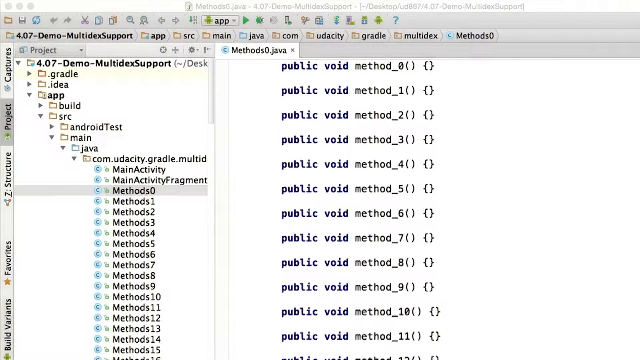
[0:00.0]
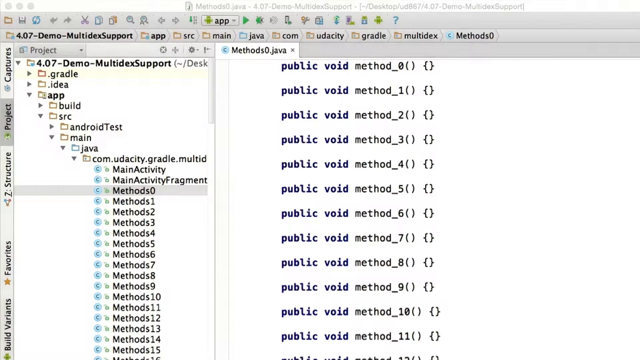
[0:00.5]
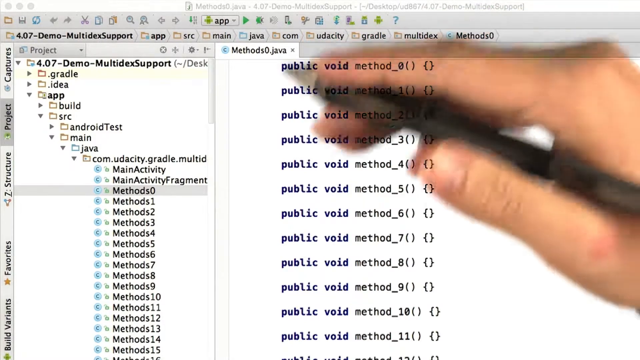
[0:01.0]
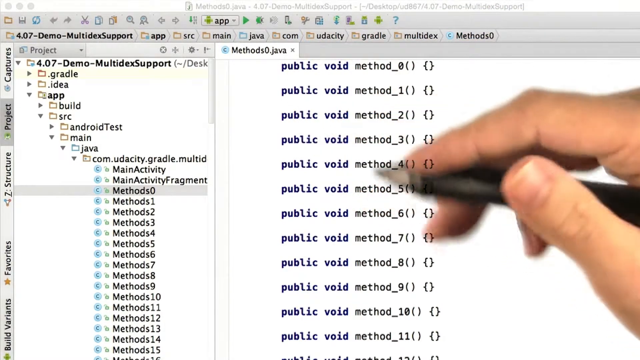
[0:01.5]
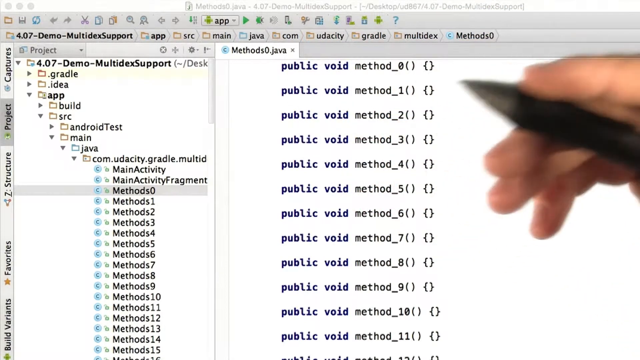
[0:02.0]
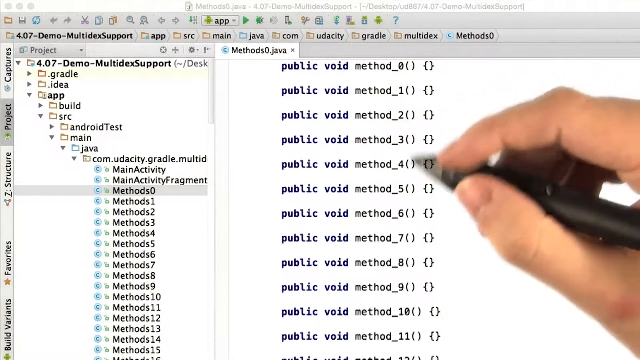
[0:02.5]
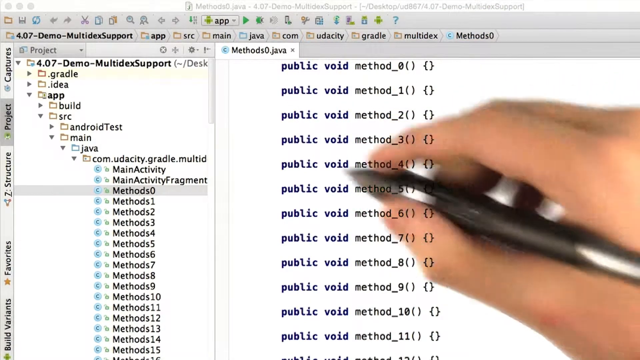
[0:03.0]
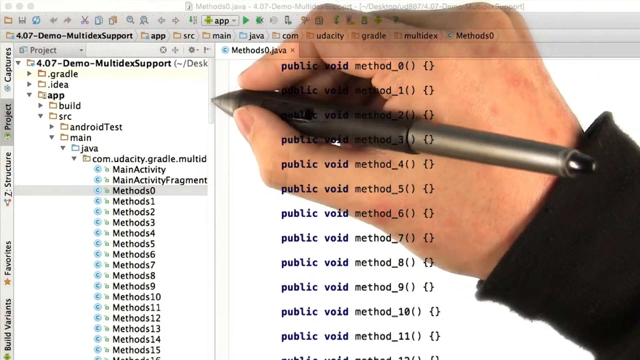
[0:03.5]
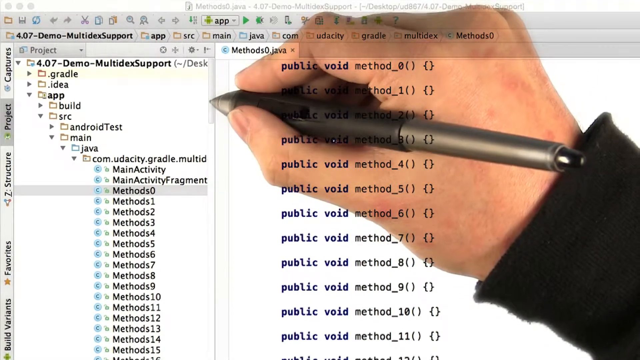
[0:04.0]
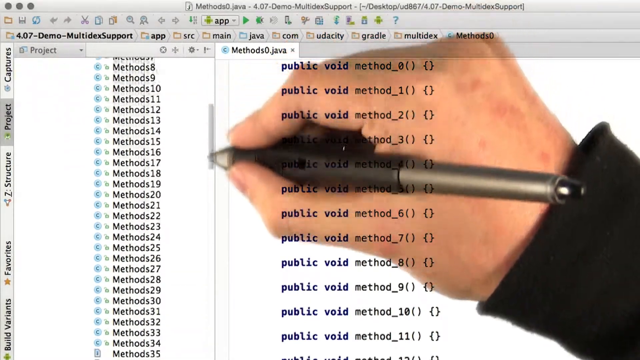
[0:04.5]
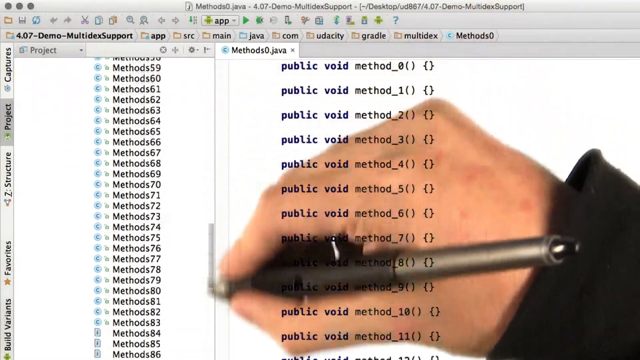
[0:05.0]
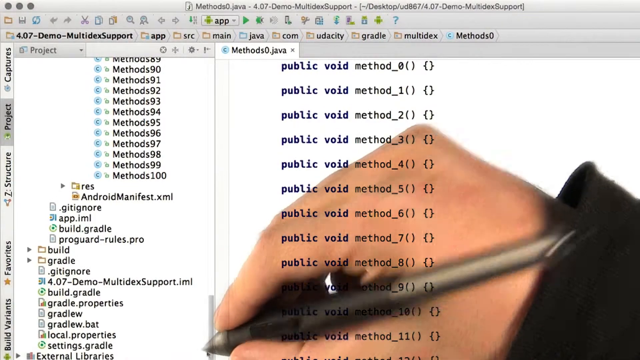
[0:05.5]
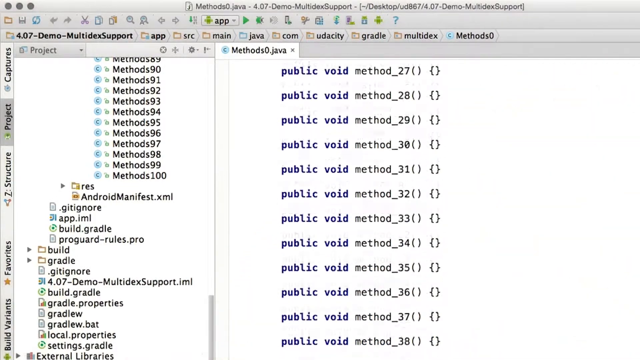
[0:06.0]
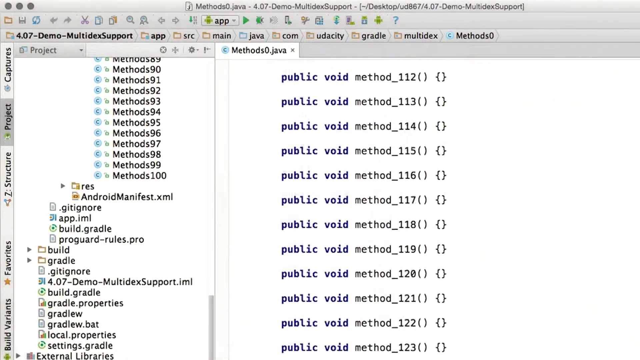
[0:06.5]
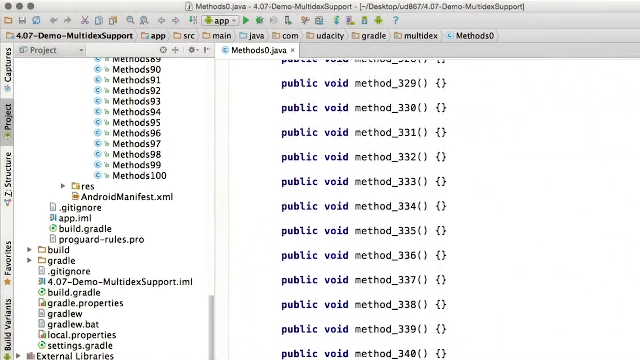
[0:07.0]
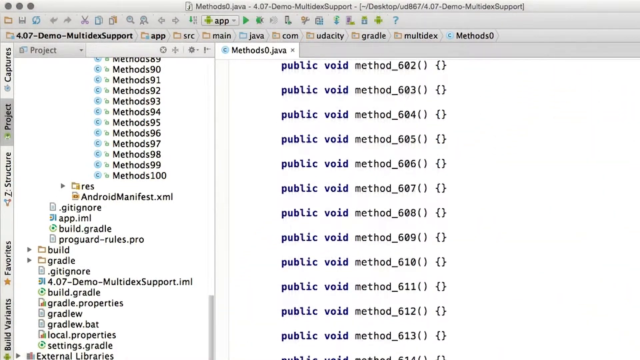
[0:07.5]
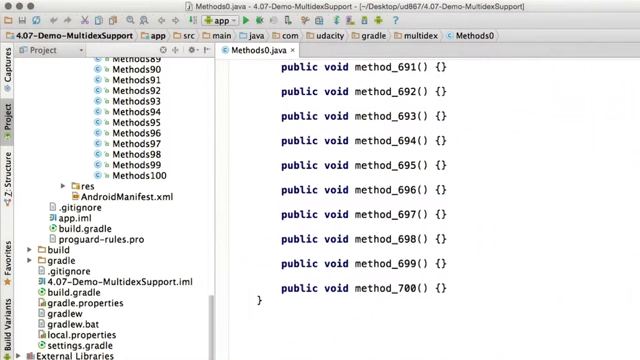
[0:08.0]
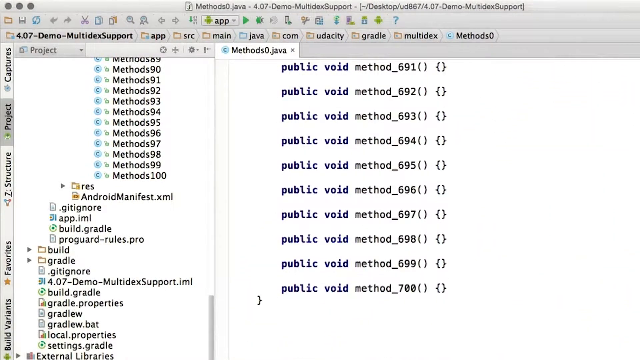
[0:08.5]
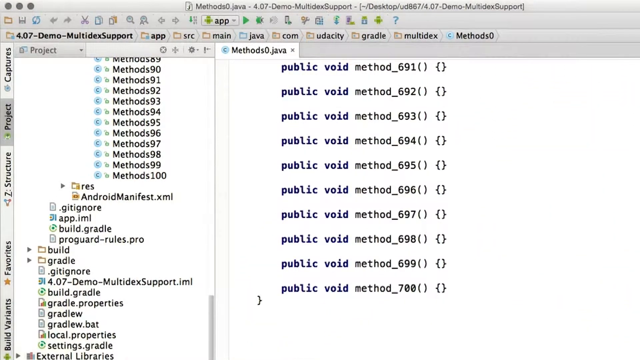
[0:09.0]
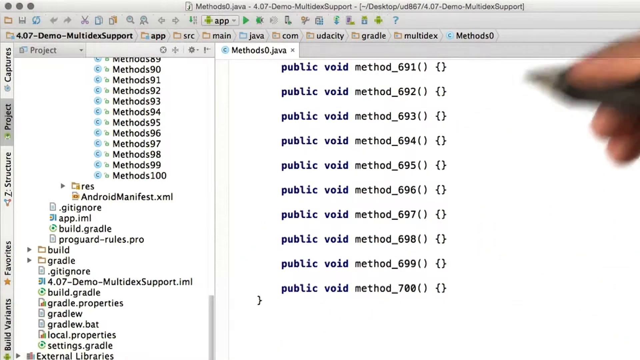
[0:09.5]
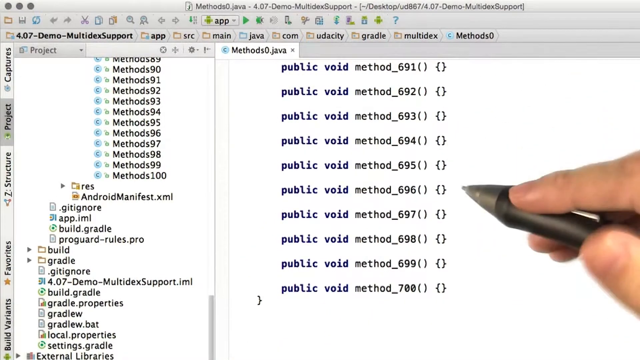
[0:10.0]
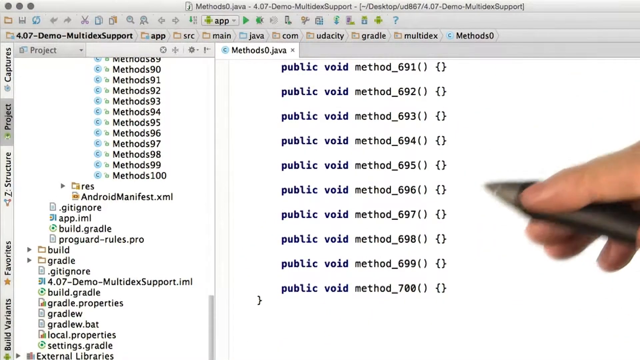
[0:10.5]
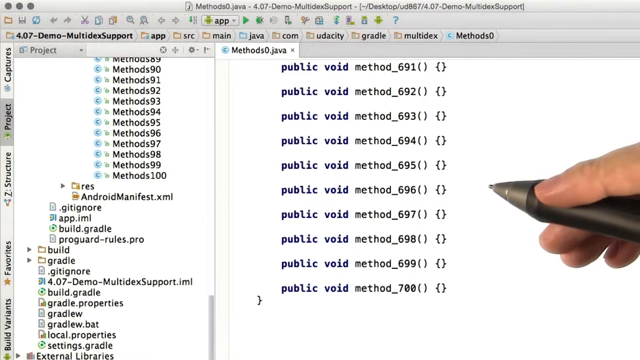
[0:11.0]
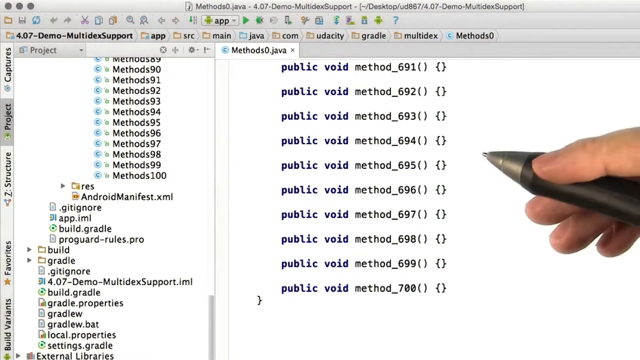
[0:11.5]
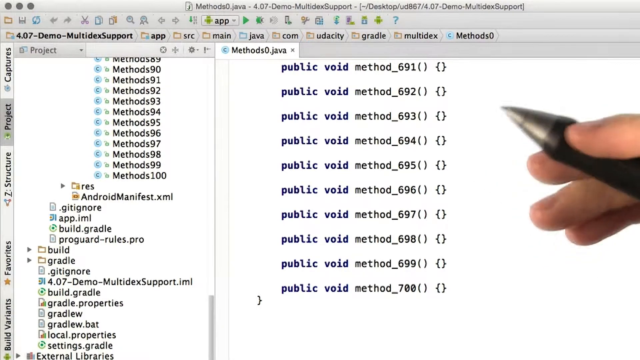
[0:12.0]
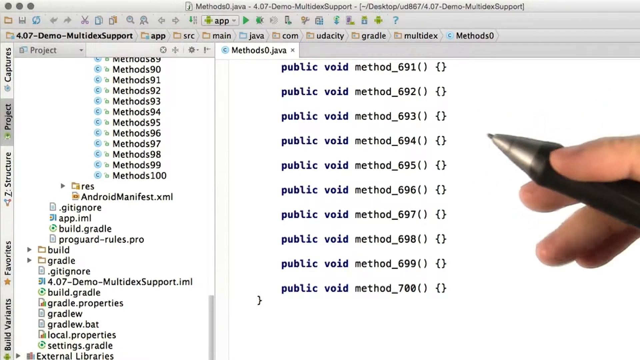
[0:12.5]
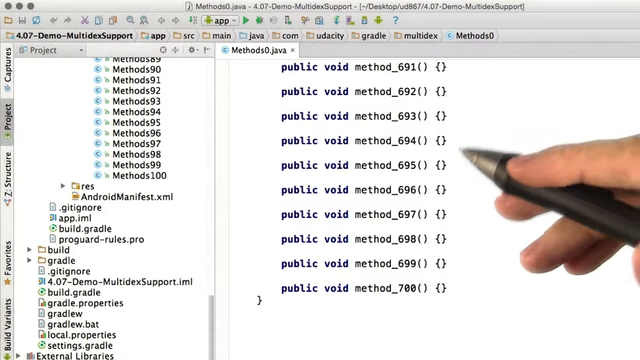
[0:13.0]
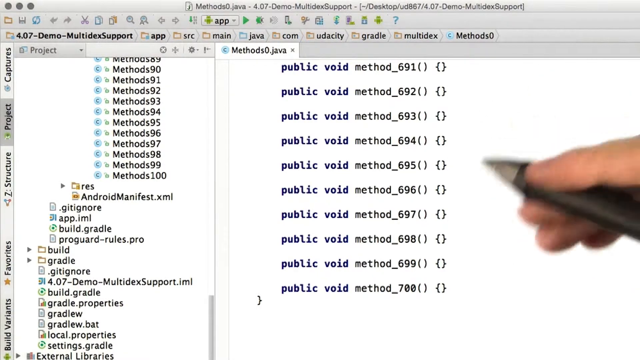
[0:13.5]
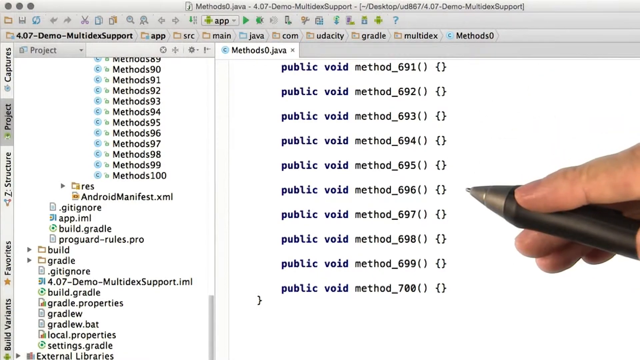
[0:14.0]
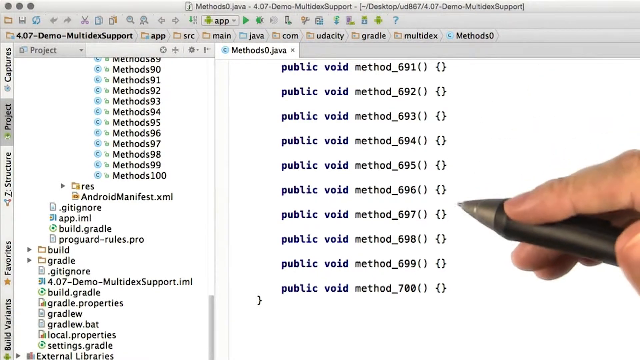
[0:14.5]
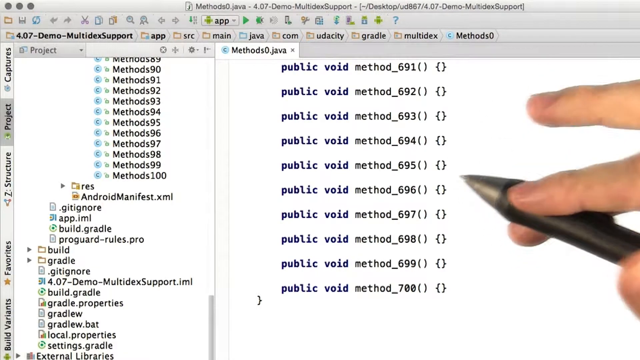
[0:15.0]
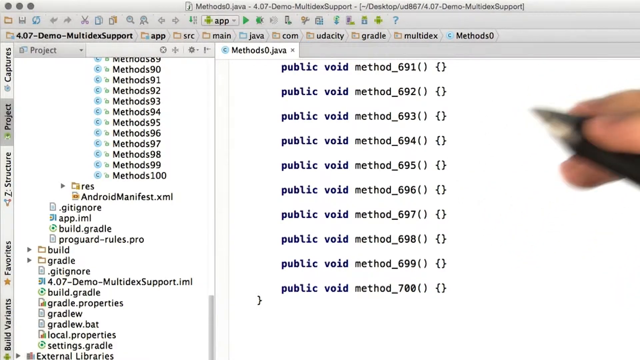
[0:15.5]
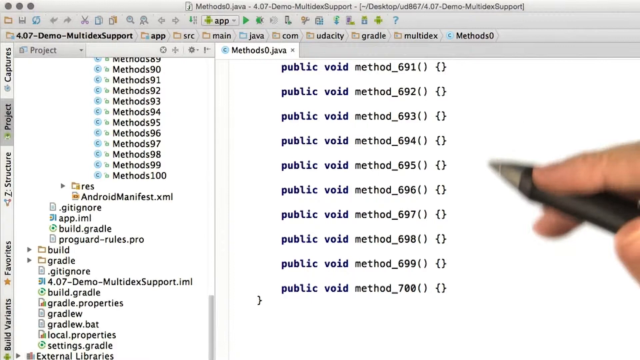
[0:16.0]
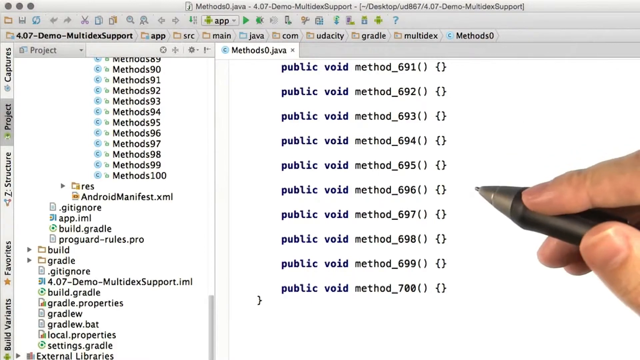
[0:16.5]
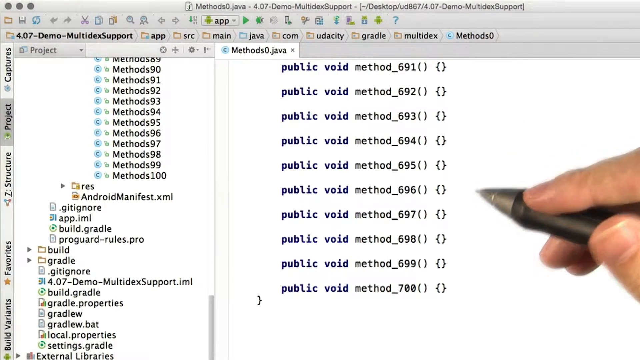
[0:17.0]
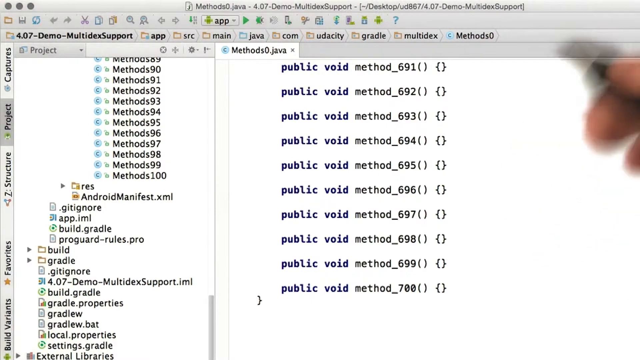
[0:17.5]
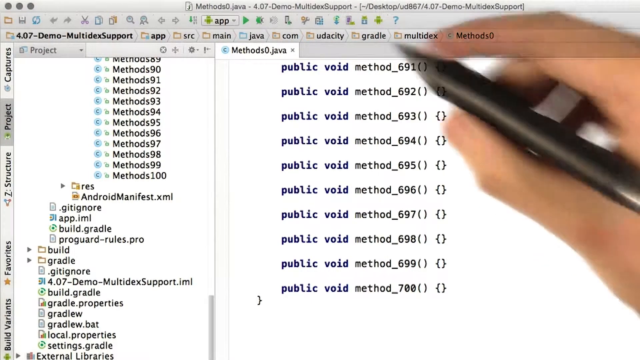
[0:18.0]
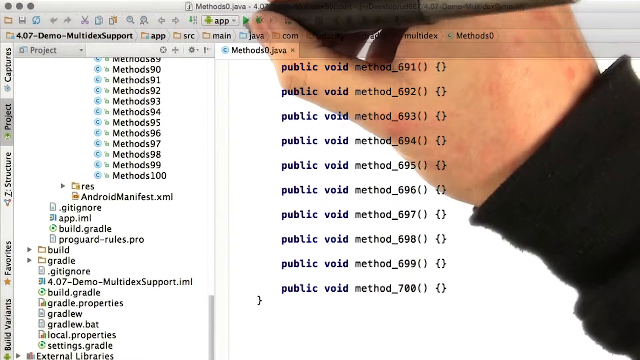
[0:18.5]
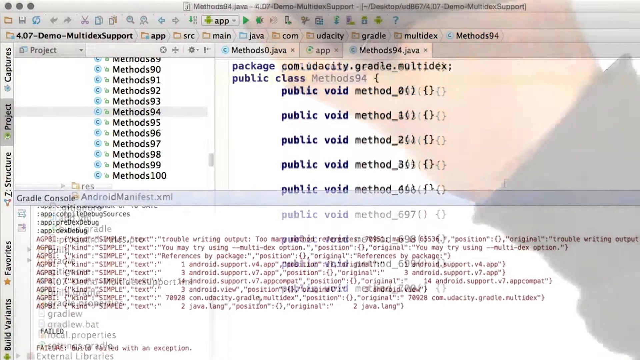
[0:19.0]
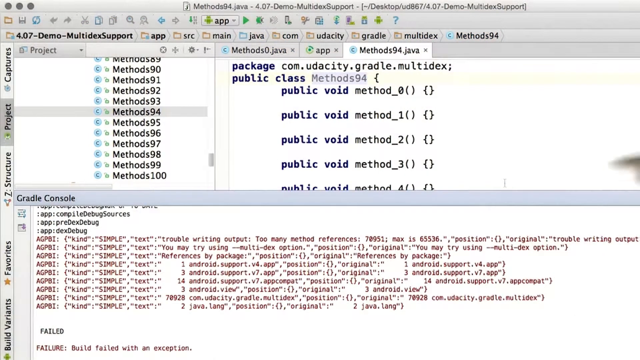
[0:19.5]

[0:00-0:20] A person holds a black pen in his right hand against a white space, and his lips are visible. Hundreds of Java coding methods are shown, along with "public void". He appears to be a lecturer teaching these methods. The background is white, and the words are written in bold black.